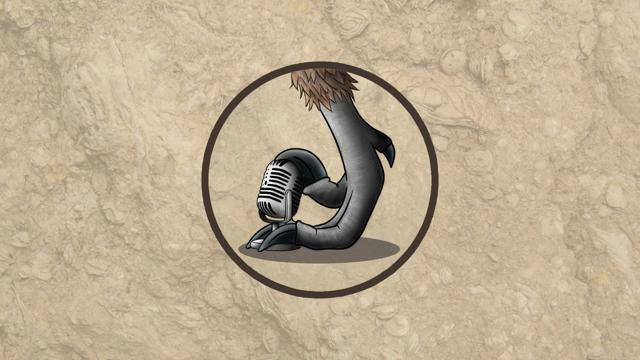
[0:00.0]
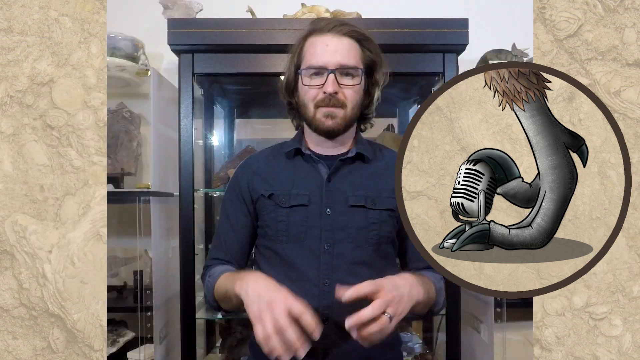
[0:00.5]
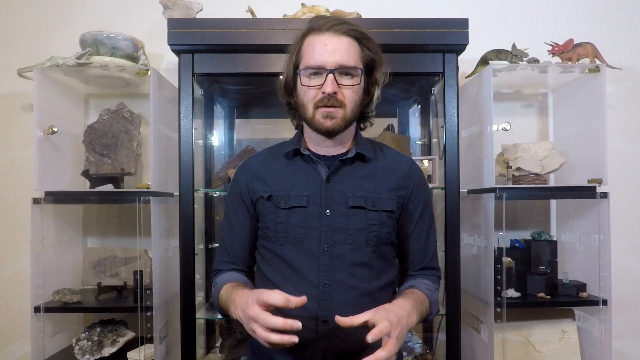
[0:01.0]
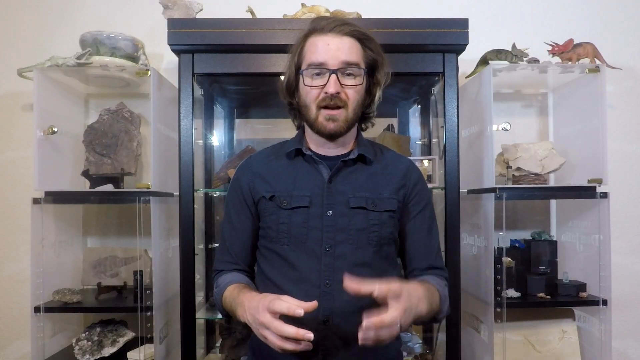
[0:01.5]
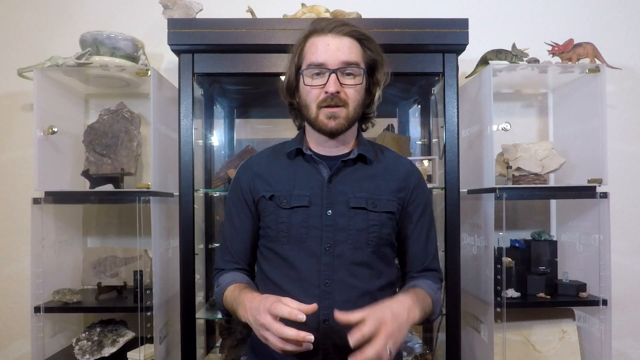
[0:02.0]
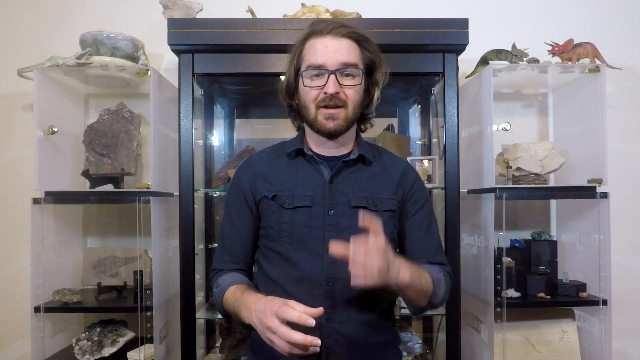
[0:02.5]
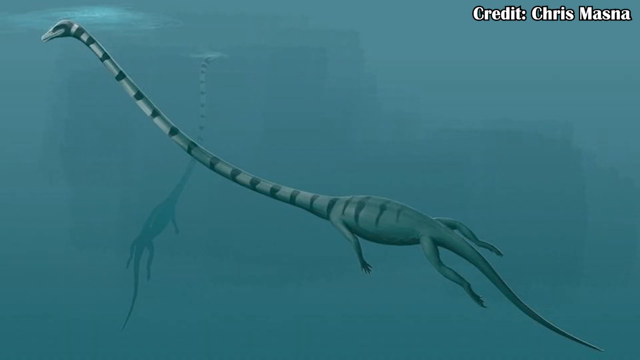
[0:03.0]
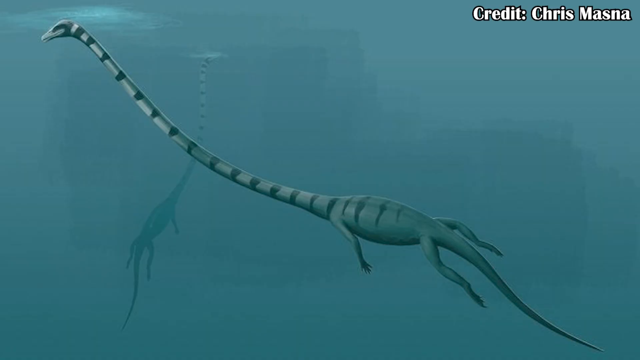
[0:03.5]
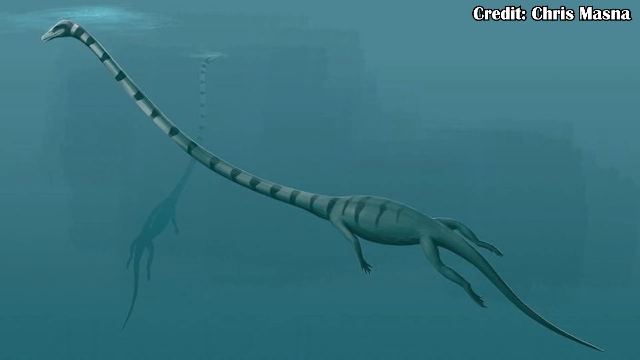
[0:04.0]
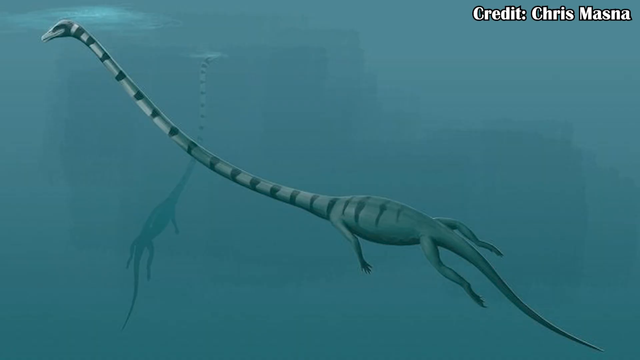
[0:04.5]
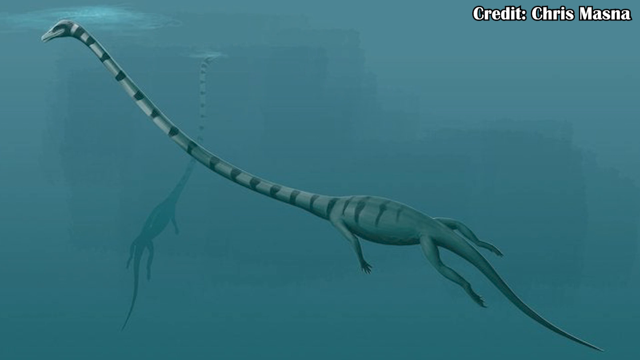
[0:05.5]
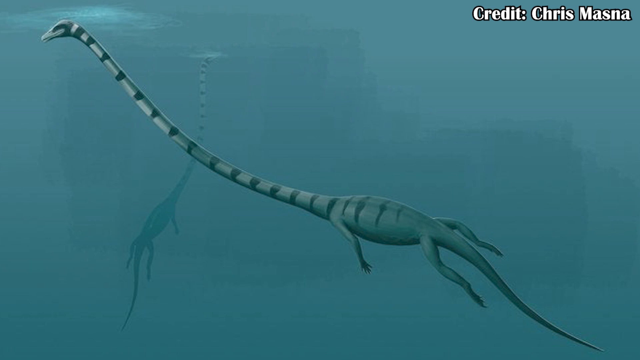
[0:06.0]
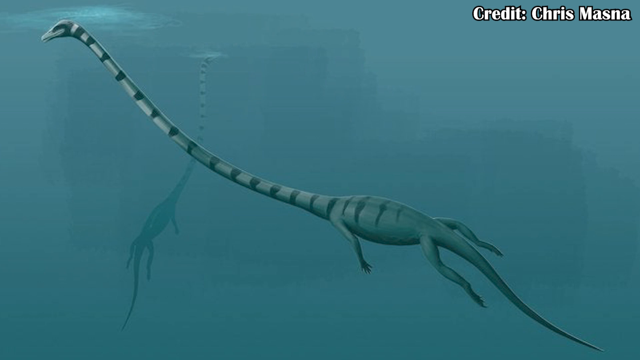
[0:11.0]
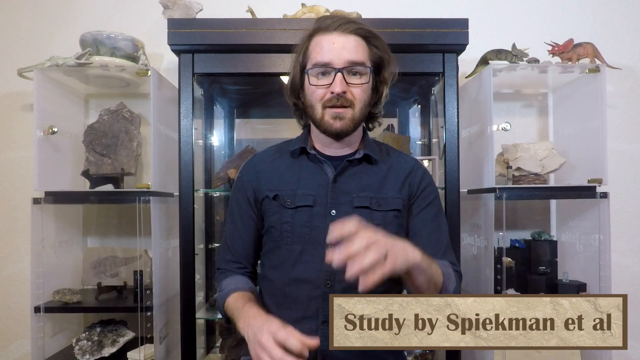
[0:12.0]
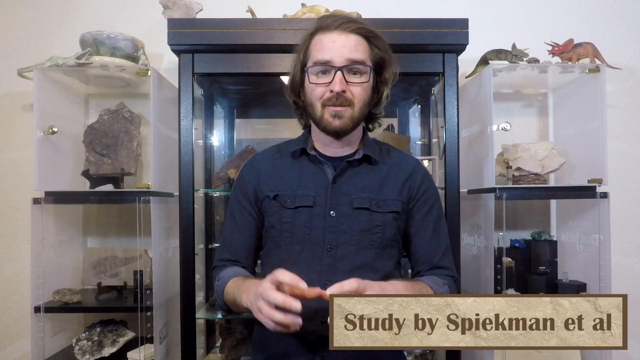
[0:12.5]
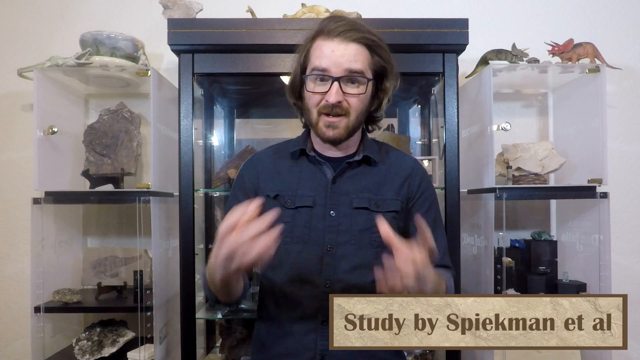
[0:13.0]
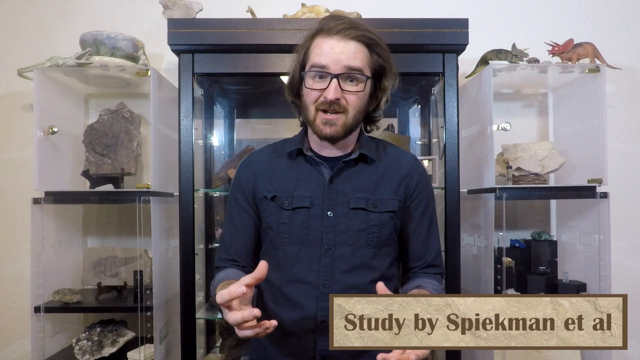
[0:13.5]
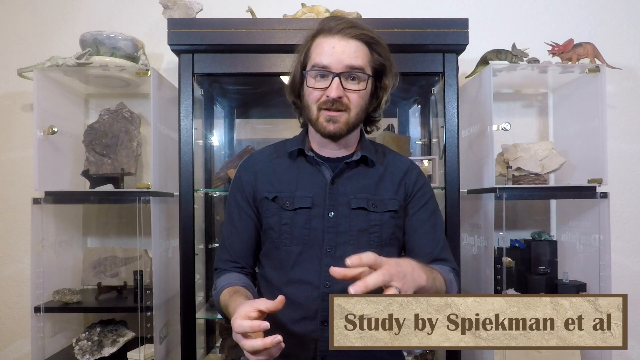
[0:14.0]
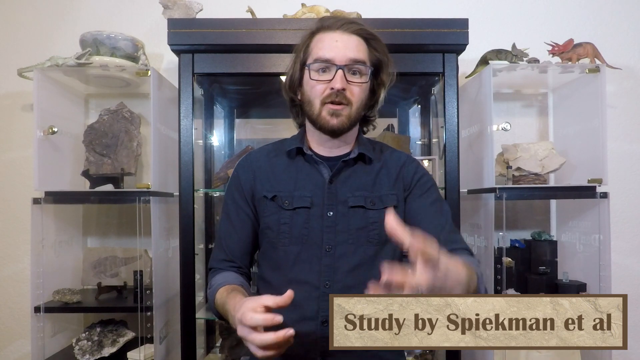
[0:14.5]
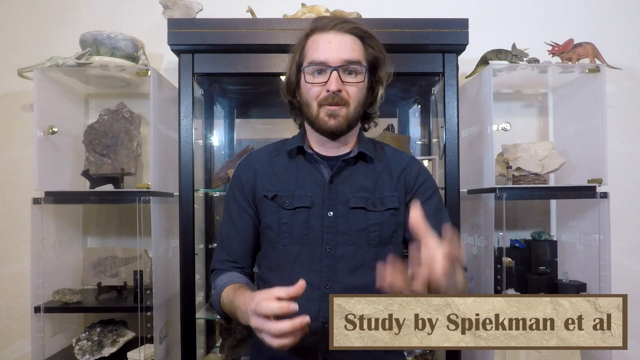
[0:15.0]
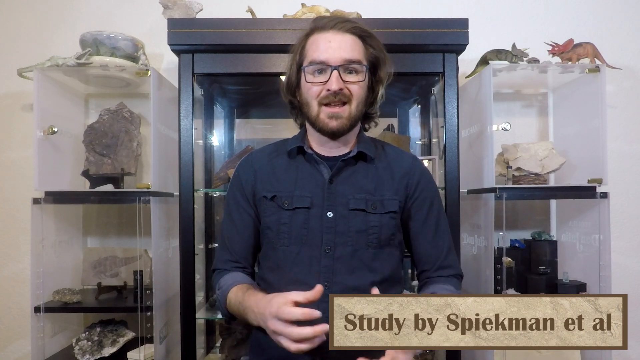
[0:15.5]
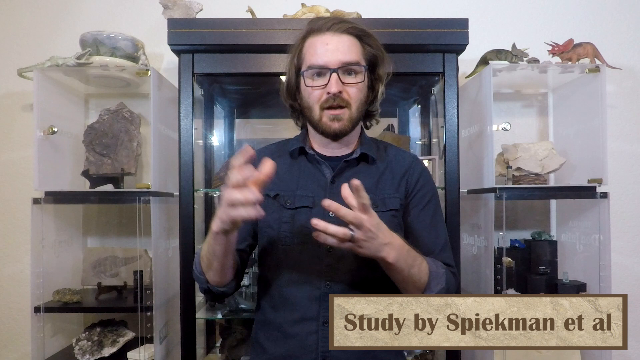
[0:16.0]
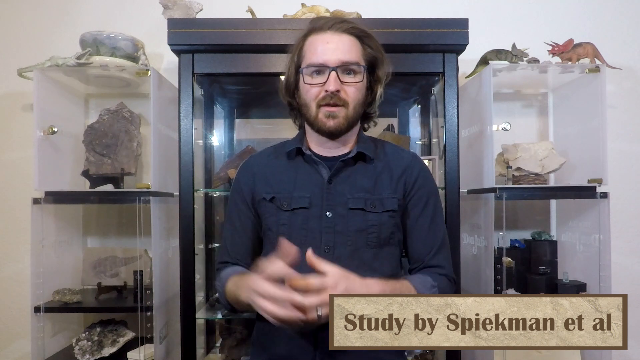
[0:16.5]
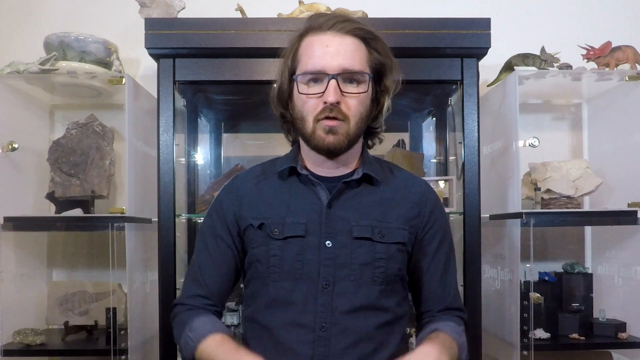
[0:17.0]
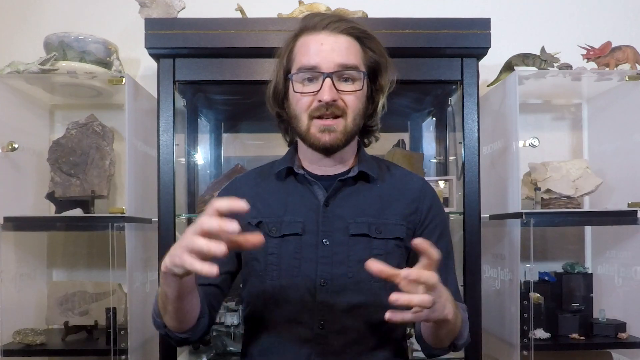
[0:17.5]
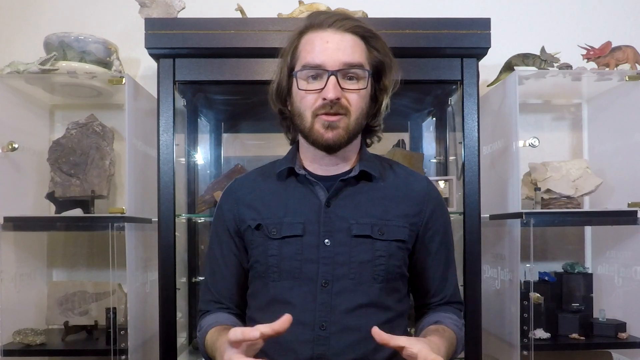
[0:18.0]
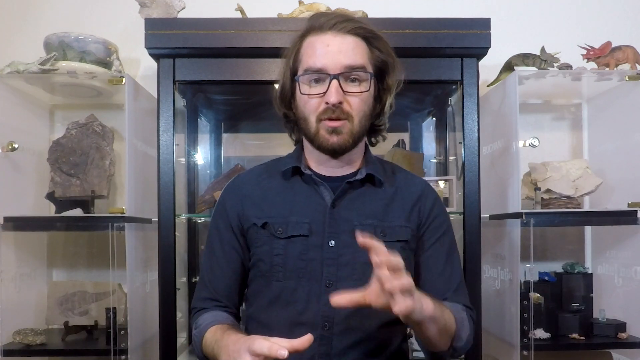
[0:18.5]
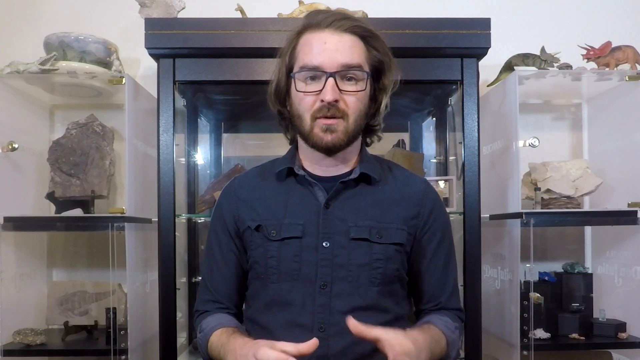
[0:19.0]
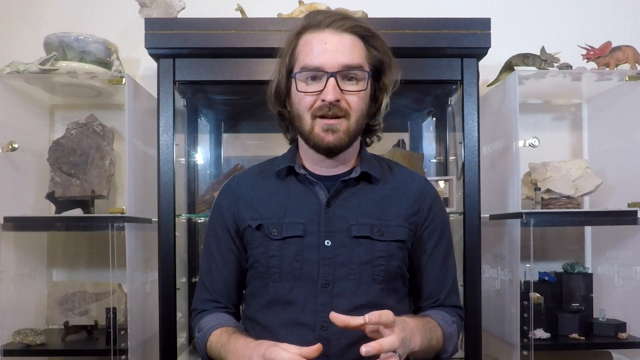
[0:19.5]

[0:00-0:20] The opening credits display a logo or icon featuring a stylized microphone between the talons of what looks like a bird of prey, possibly a raptor. After a second, the video cuts to the host of the show, who appears to be a white man in his 30s. He wears eyeglasses and a dark-colored shirt with two front pockets. Behind him are fossils of dinosaurs and other extinct plant life on display cases, and he is in the middle, in front of a cabinet. The scene changes to an artist's rendition of an extinct marine dinosaur with a very long neck, with stripes all over its neck and the back of its body; it is underwater. No name for the dinosaur is shown; only the name Chris Manza or Mazna appears, credited for the drawing. The video then returns to the host, who is still talking in a very animated way, moving his hands around. A sign in the bottom right corner has the words "study by Spikeman et al". The camera then zooms in to show more of his upper body.